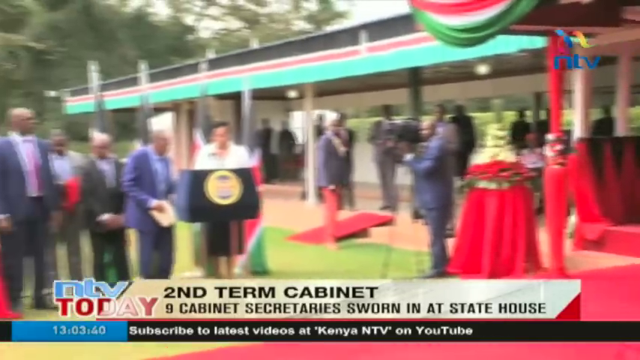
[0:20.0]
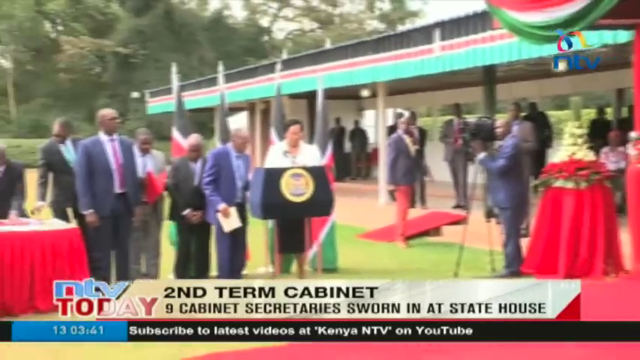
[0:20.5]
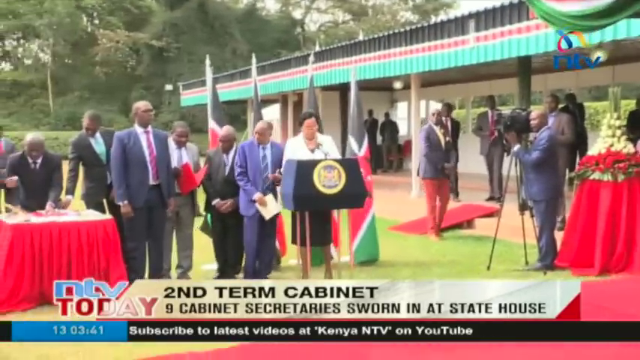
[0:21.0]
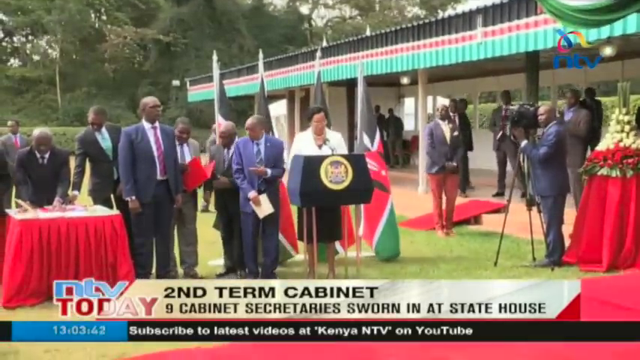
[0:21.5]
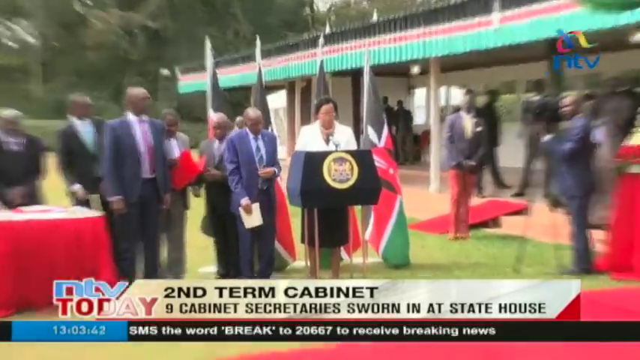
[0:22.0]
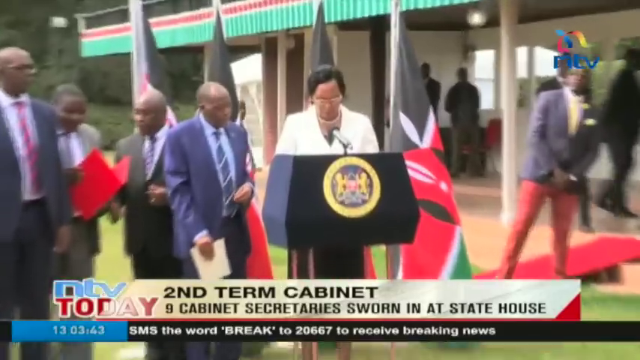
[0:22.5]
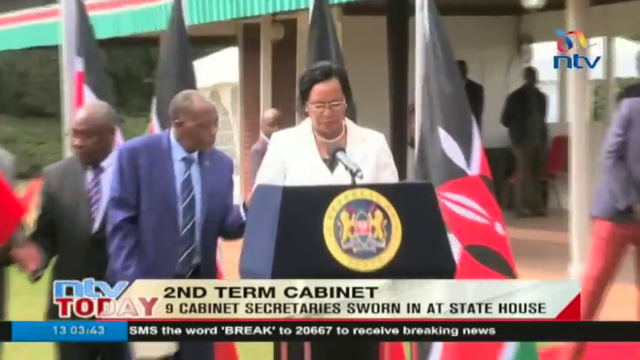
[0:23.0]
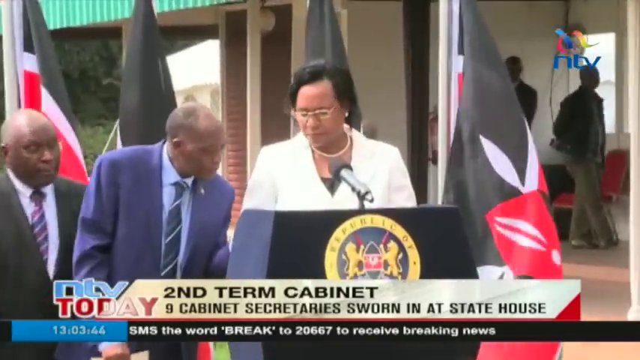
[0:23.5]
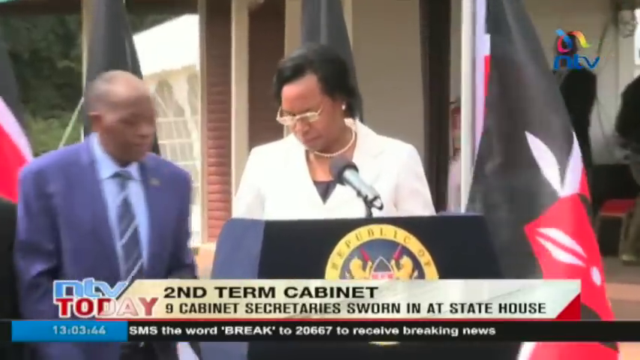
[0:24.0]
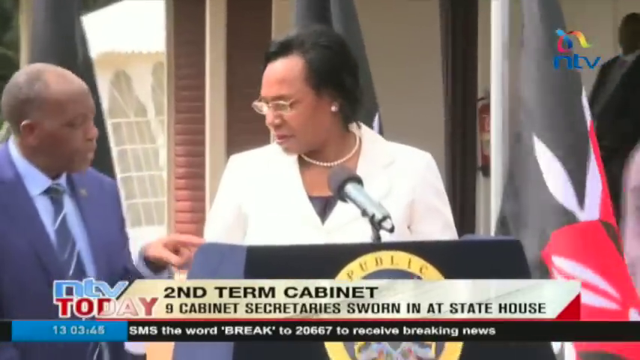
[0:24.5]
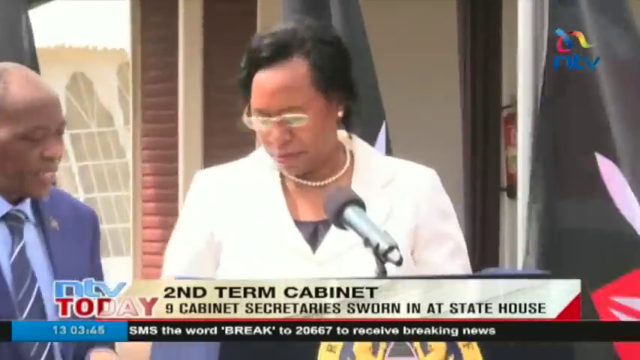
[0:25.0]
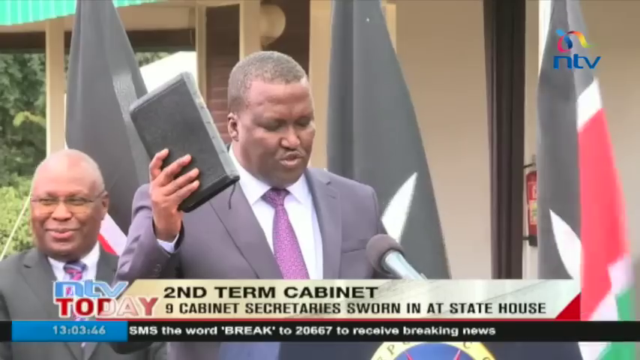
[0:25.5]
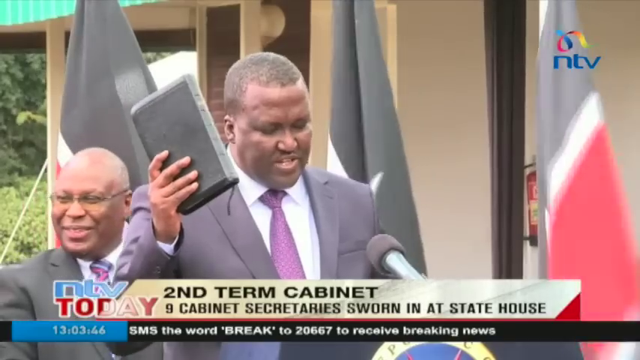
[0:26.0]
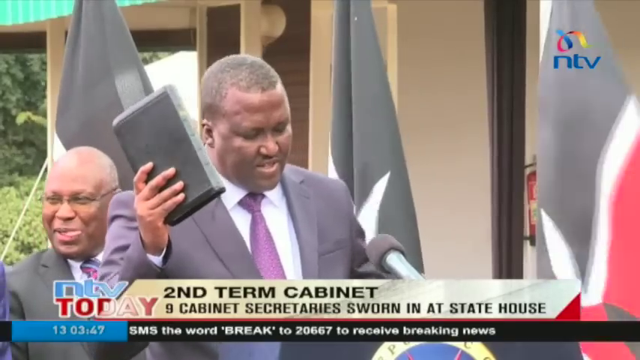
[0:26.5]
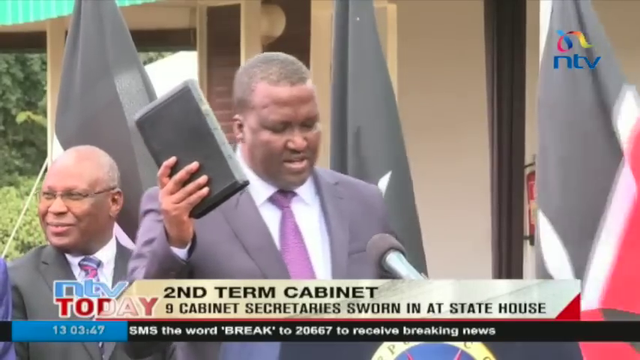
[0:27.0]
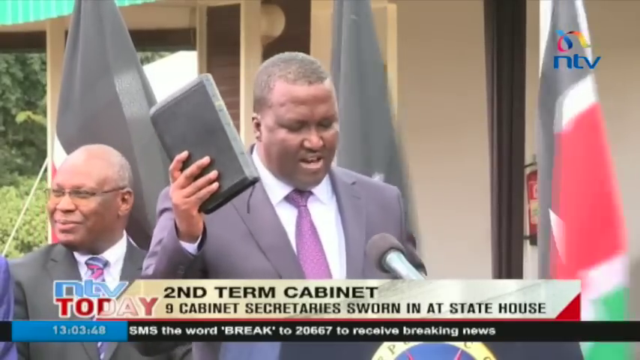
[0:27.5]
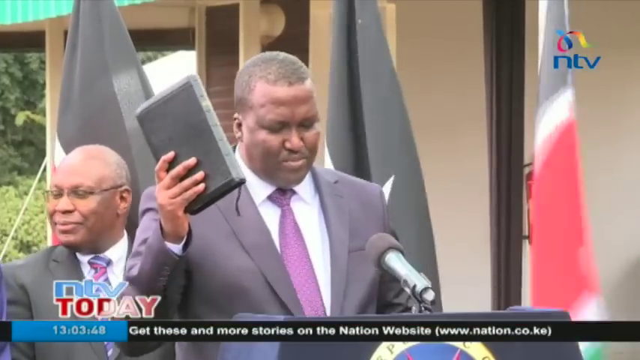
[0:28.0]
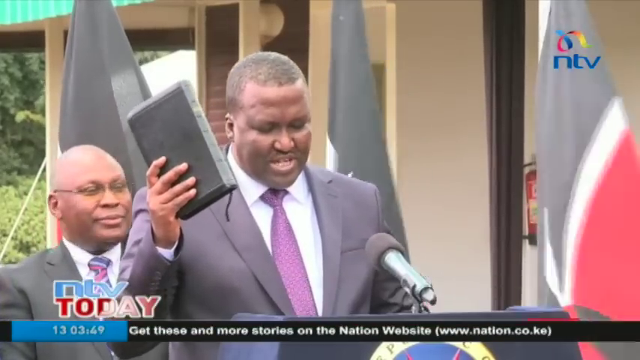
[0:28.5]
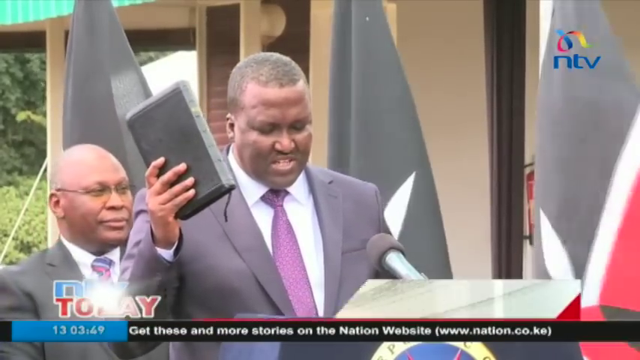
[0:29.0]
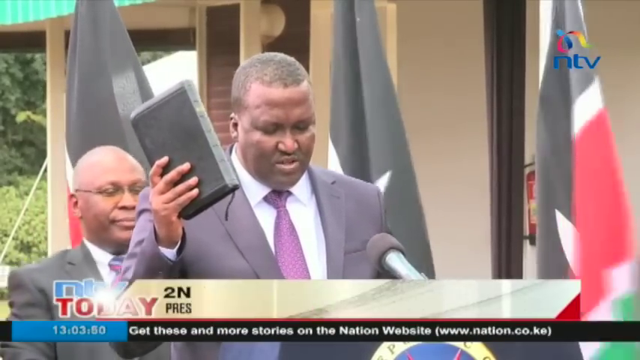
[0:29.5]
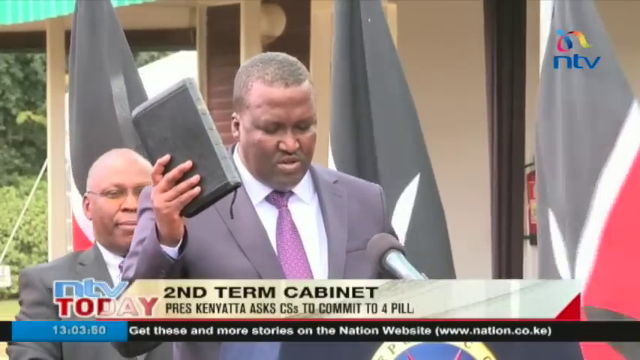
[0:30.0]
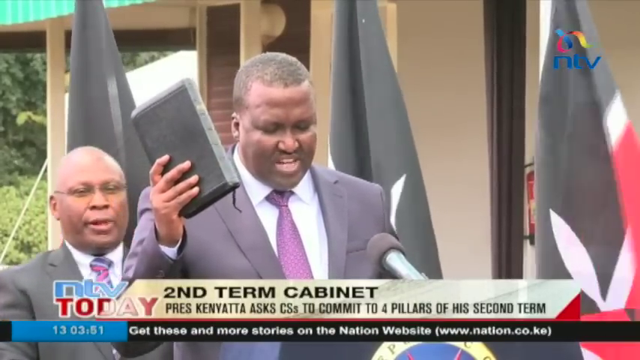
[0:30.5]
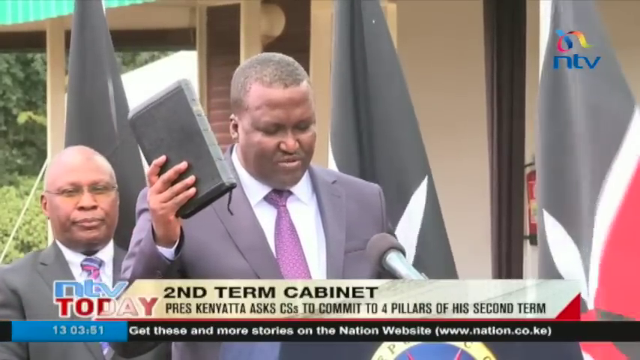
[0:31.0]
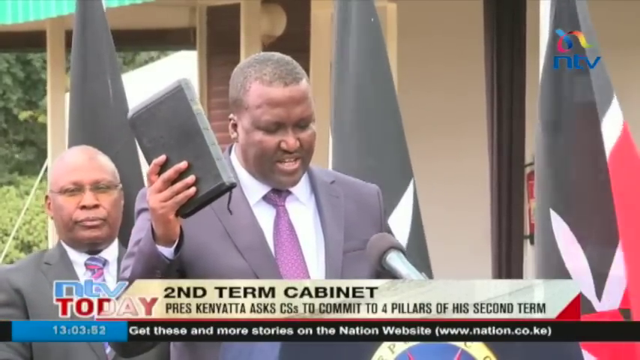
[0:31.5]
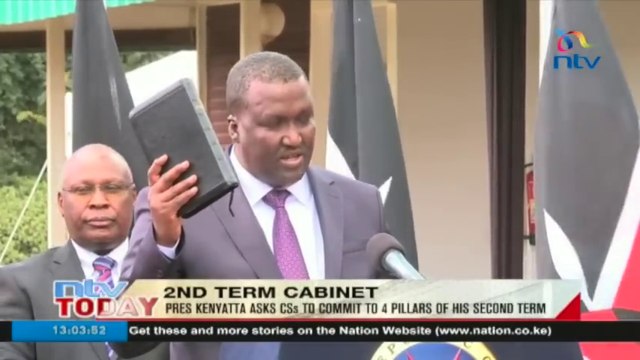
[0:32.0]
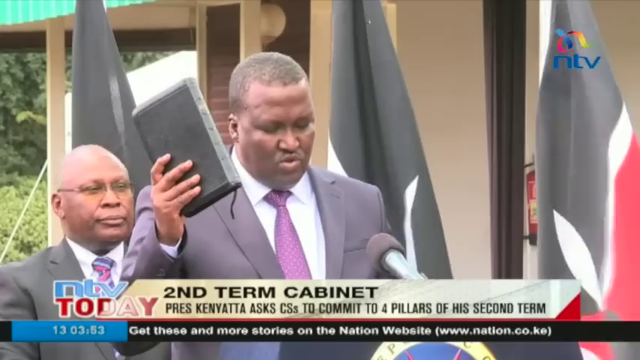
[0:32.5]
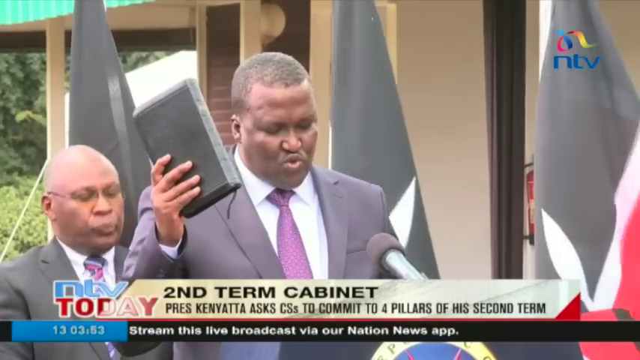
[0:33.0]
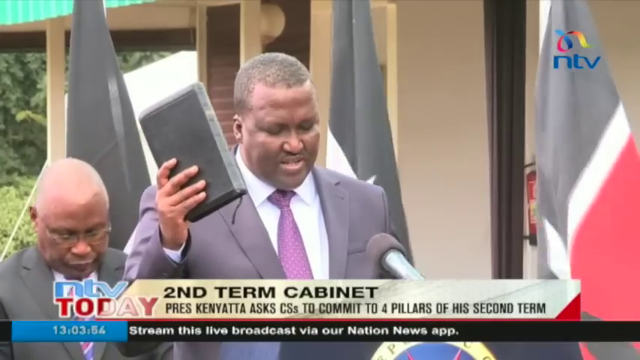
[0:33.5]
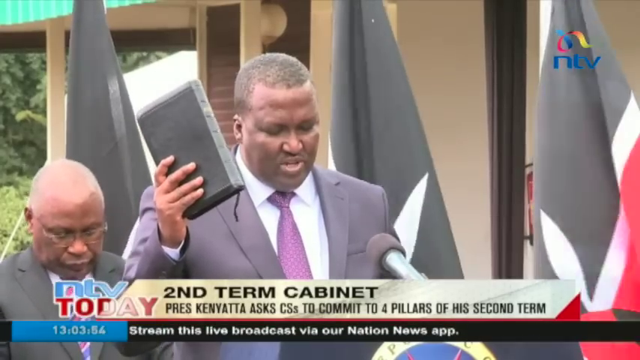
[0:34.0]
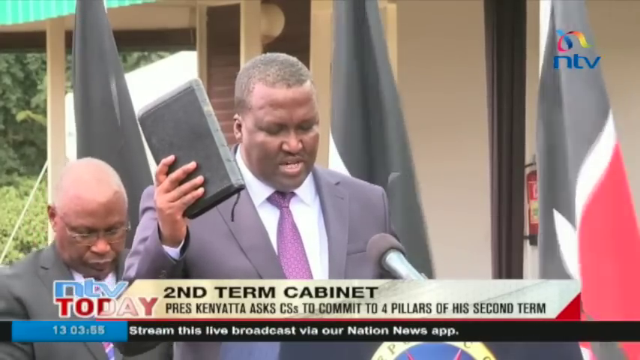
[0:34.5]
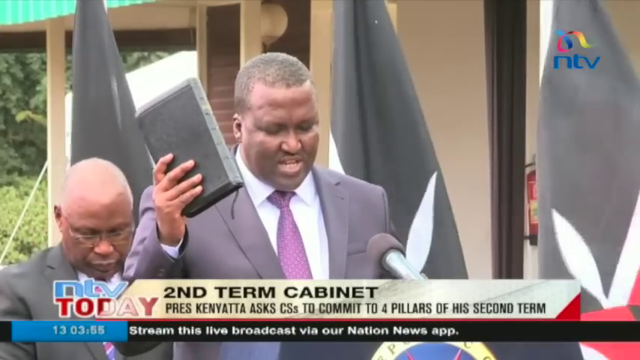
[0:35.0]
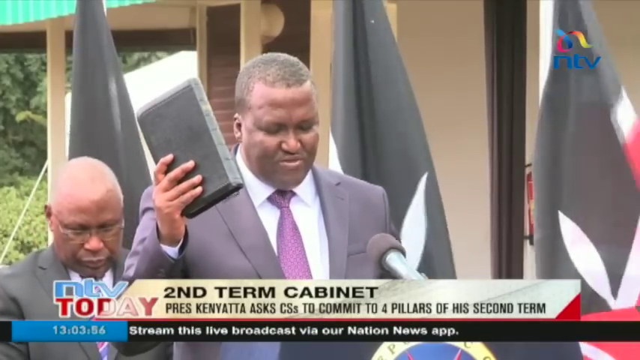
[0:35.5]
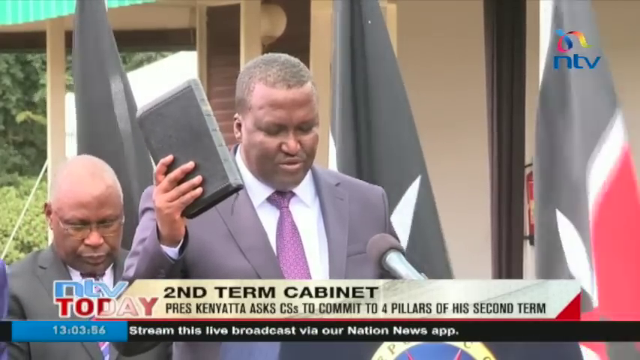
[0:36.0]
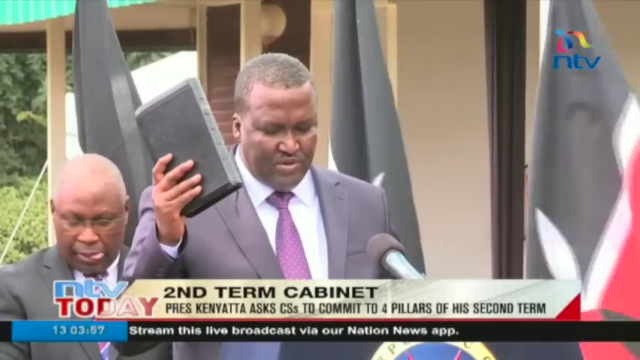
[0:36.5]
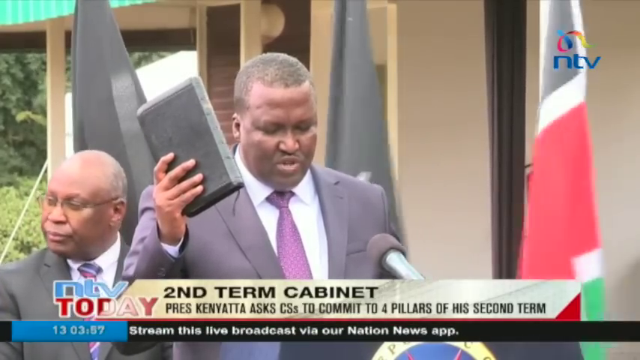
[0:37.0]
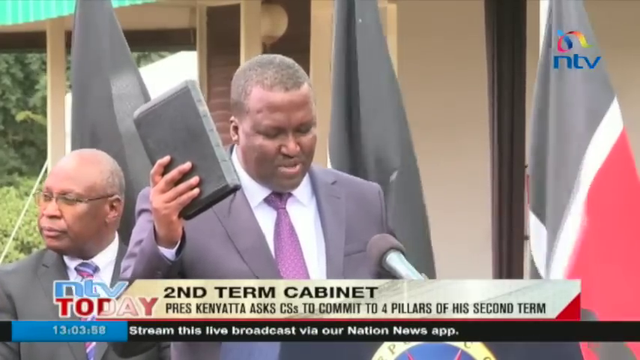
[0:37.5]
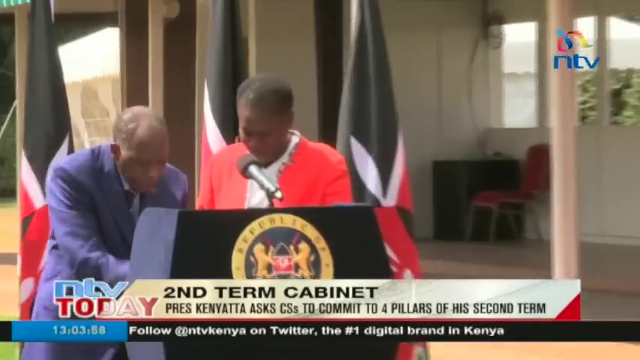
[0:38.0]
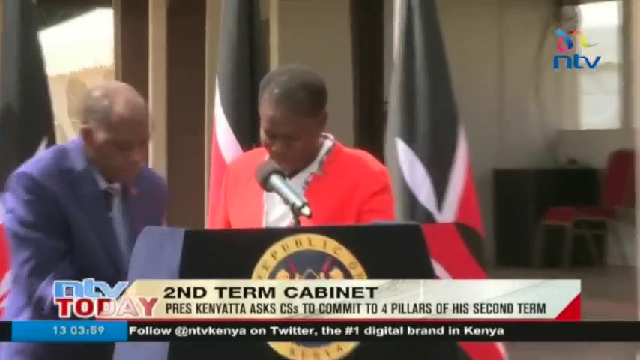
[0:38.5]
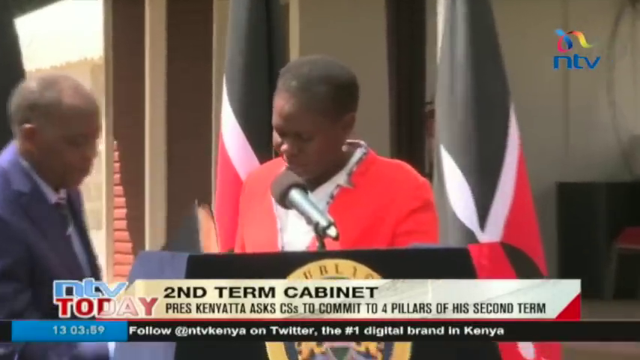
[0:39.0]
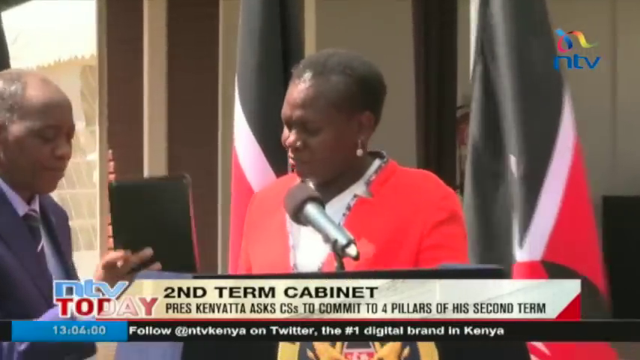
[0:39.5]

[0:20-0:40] An NTV News story carries the headline "second term cabinet, nine cabinet secretaries." A lady addresses the cabinet conference. One of the men swears in while holding a Bible, and another lady also holds a Bible as she swears in front of the people. The setting has a red color theme, and many people are present, apparently members of the cabinet. The headline reads "nine cabinet secretaries sworn in" at the state house.